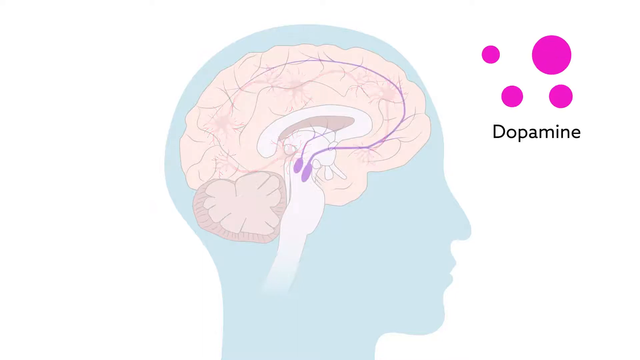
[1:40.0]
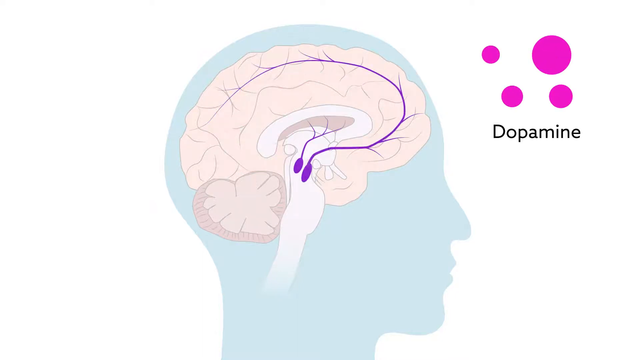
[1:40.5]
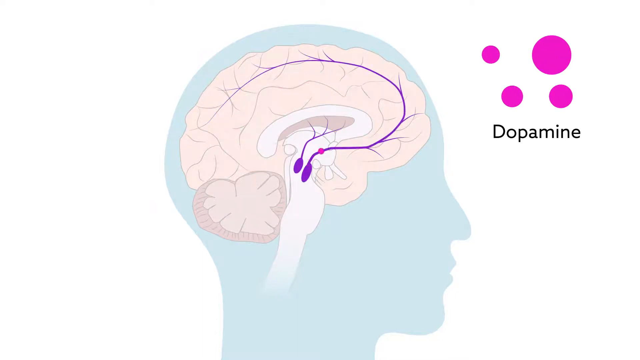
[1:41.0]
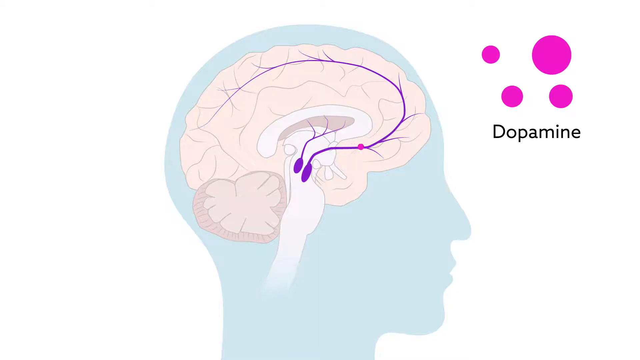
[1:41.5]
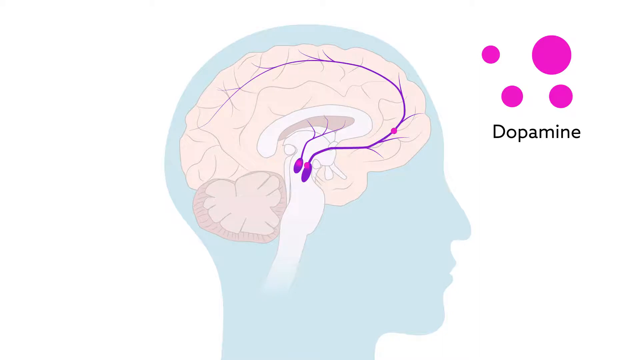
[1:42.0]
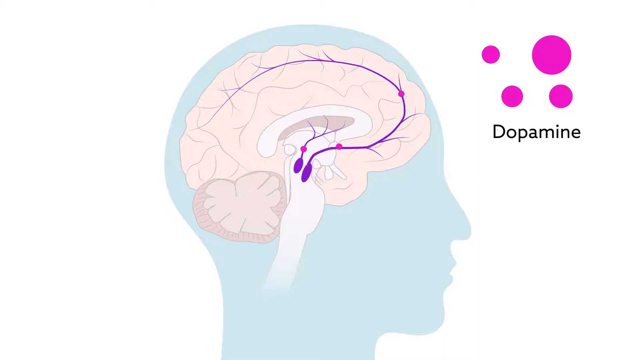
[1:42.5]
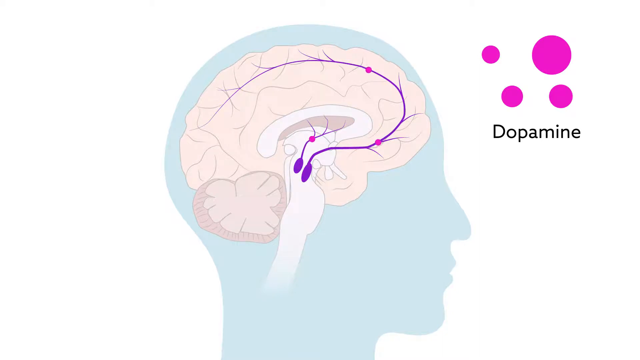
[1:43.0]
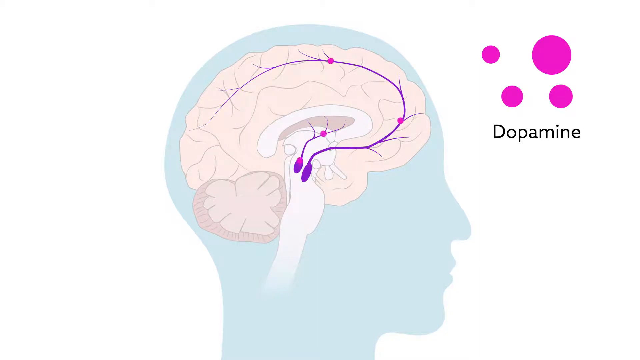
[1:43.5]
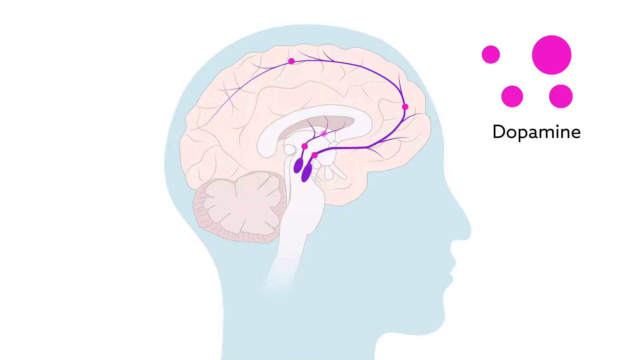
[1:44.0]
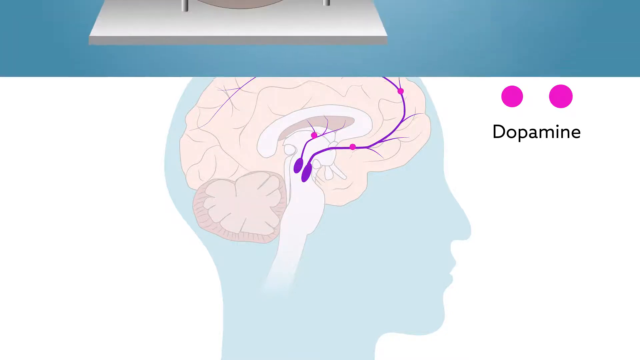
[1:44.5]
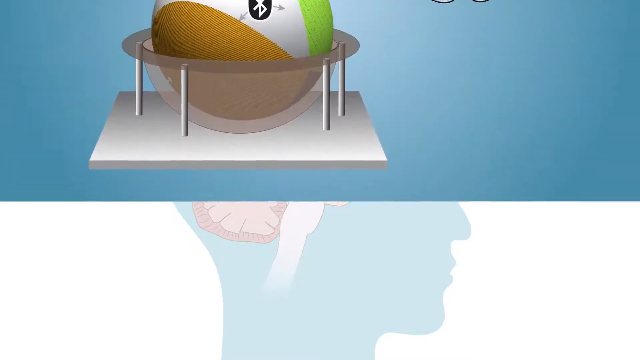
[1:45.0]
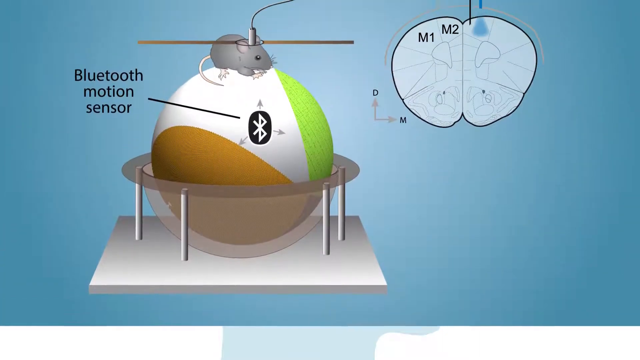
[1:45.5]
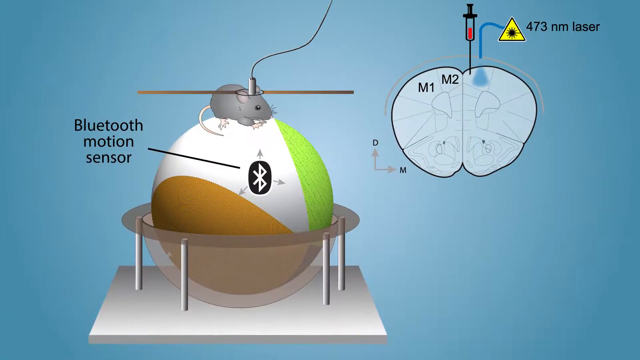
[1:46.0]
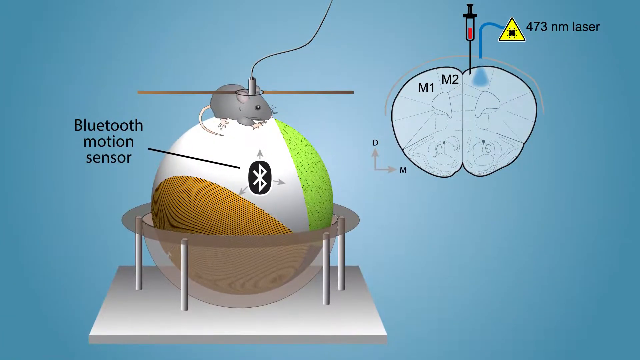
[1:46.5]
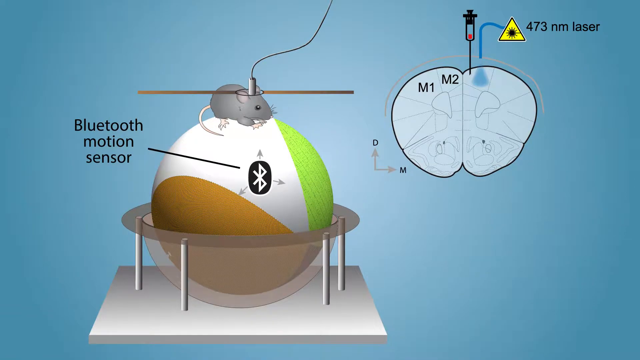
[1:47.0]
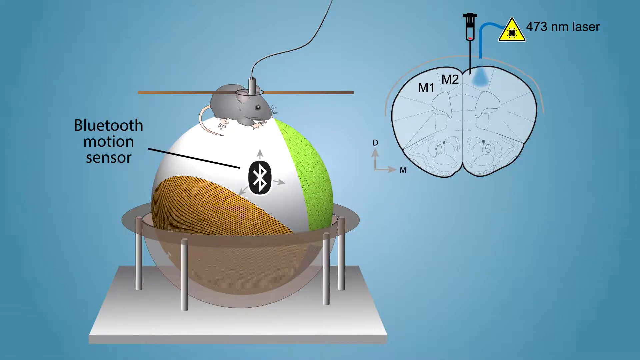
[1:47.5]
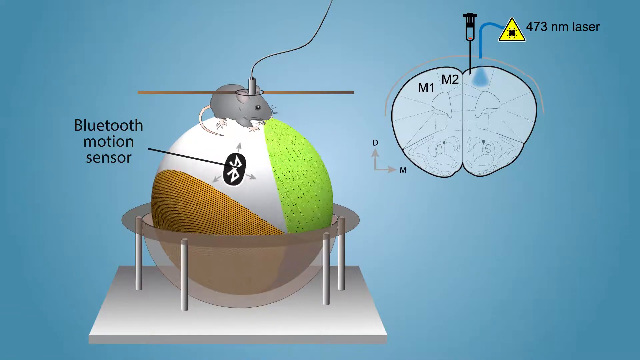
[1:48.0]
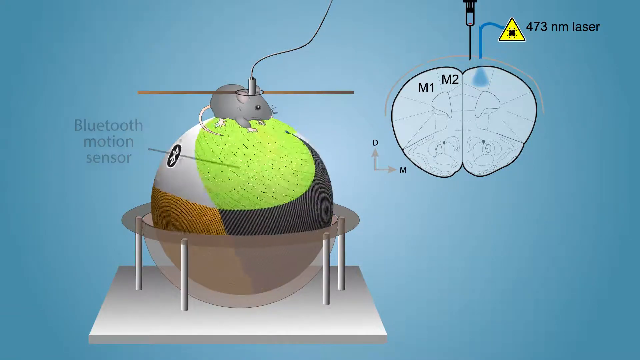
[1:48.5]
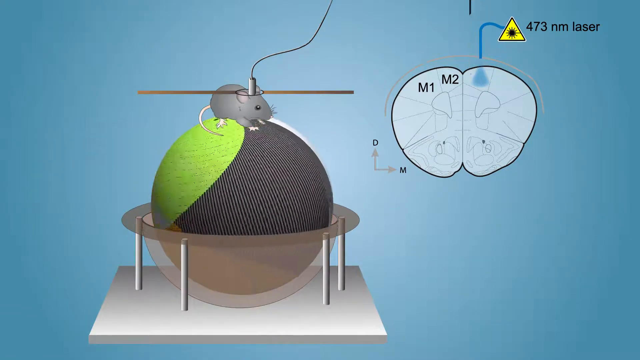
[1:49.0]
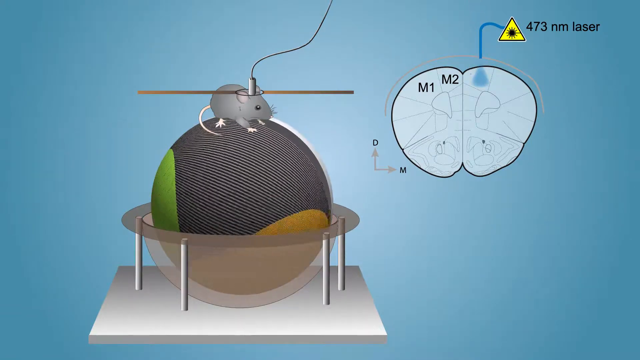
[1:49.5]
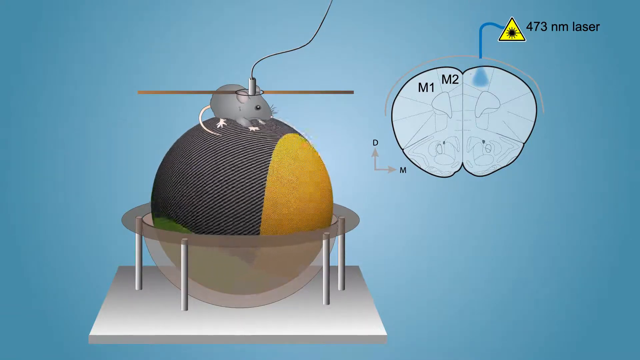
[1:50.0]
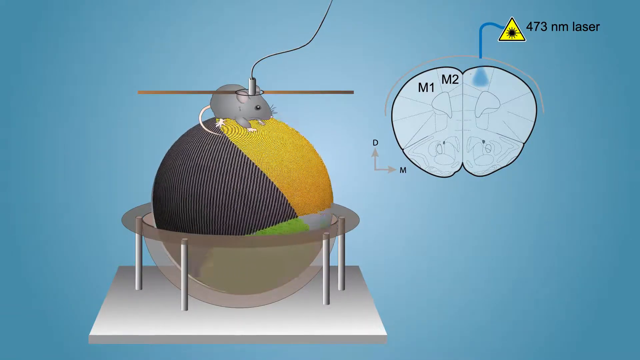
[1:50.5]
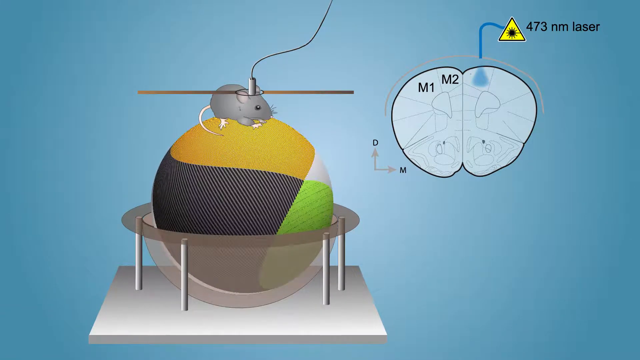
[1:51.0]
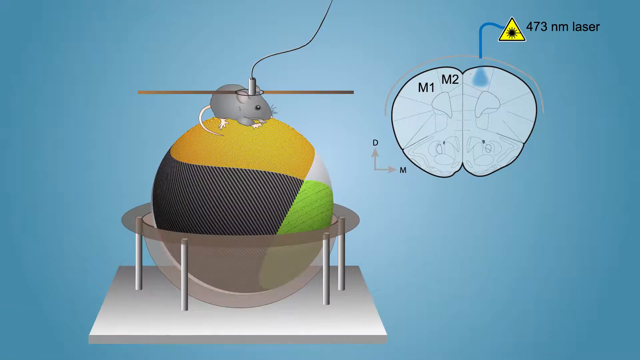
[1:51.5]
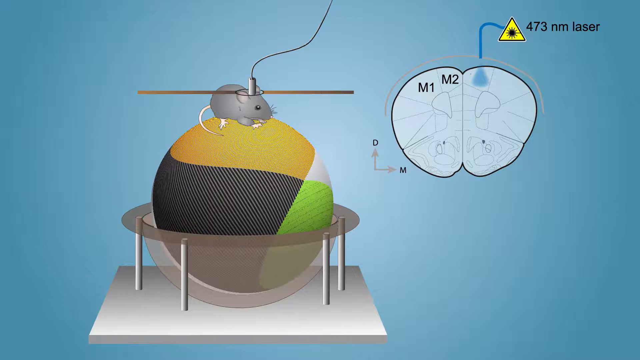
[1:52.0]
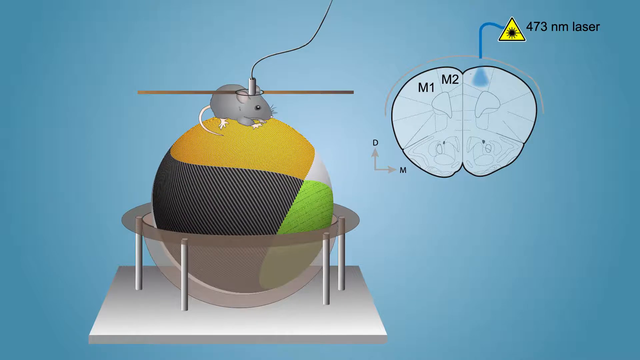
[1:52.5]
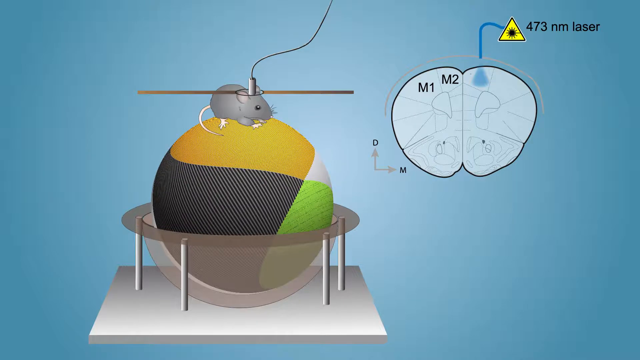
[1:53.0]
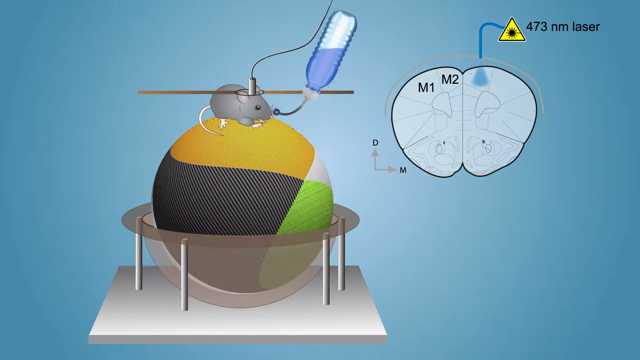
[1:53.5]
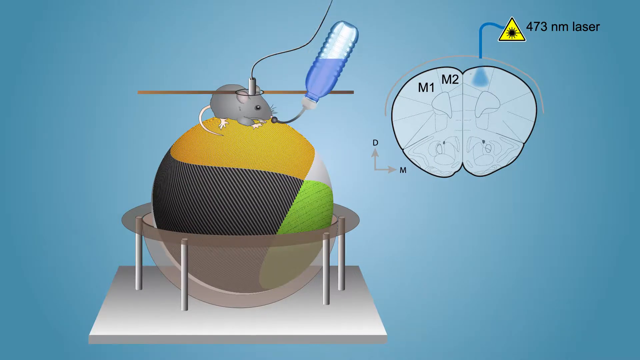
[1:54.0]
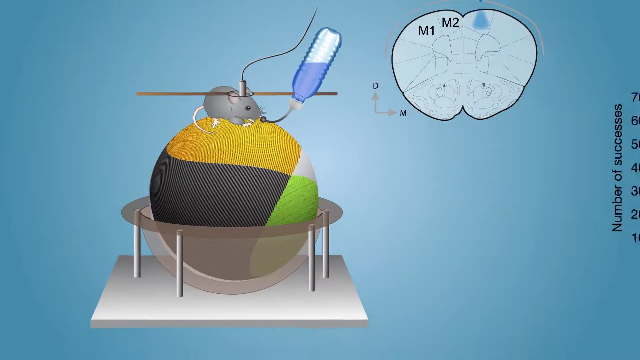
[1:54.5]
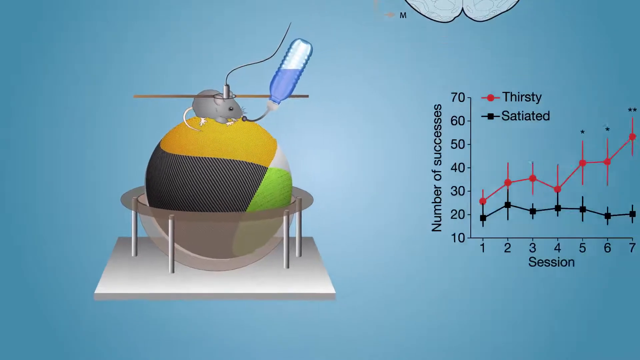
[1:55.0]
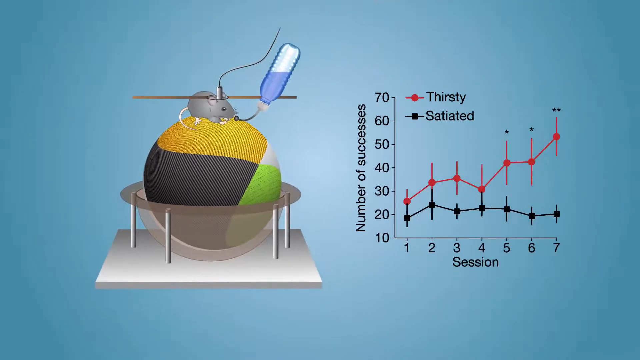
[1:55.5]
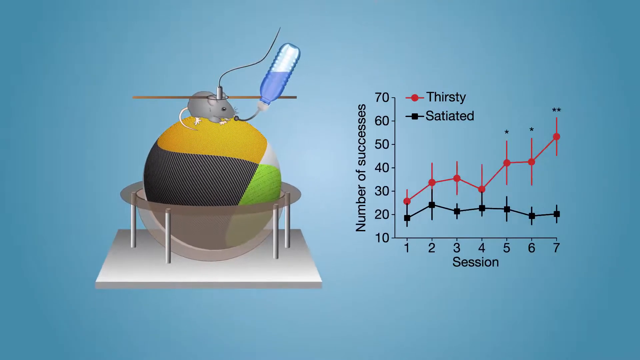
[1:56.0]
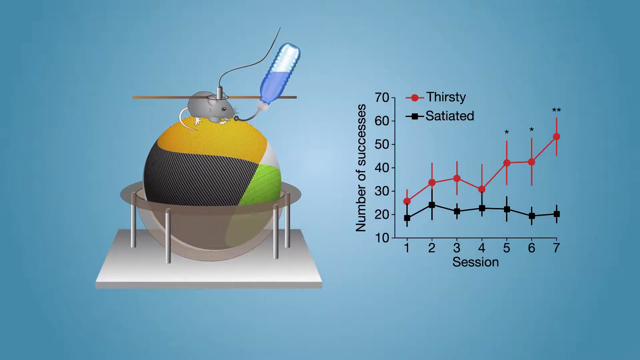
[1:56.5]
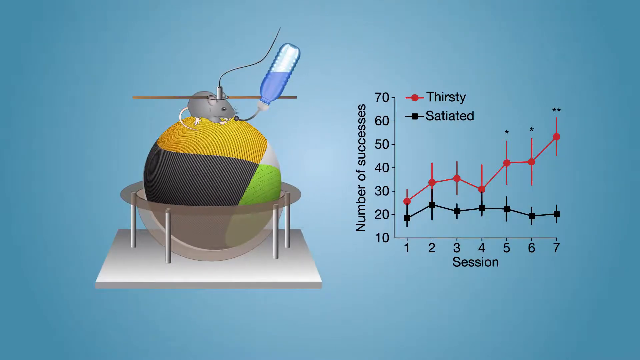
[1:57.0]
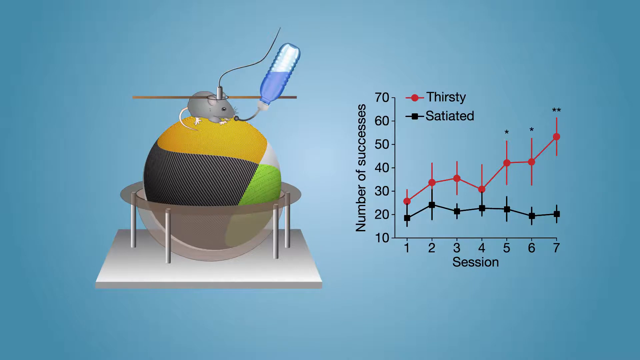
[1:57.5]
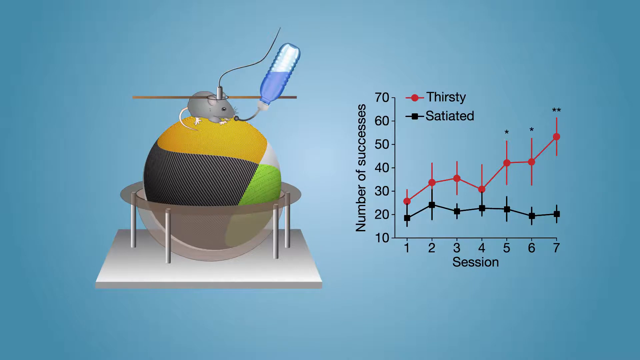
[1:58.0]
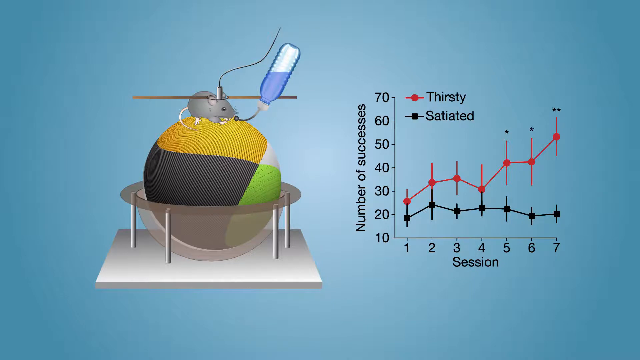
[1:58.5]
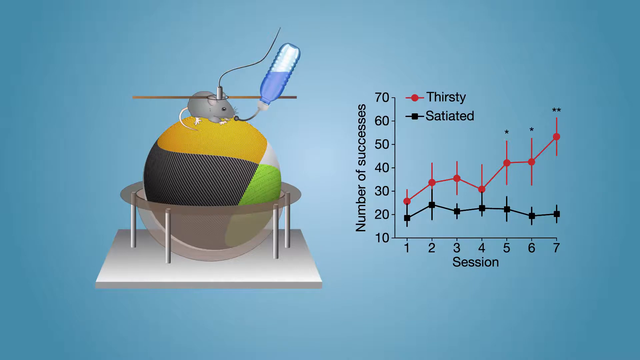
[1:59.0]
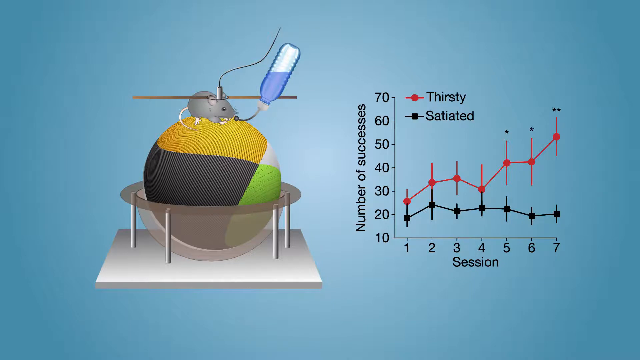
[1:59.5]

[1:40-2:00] The same brain diagram now has purple veins instead of red ones; the purple veins run in a circular fashion, with a couple of veins veering off in a curved fashion. The topic apparently is dopamine: a big picture of dopamine appears at the top right, and in the diagram it is shown as small pink or pinkish-purple dots flowing upwards and around the purple veins in the brain. Another animation follows in which a globe turns because a cartoonish gray mouse with a pale pink tail sits on top of it, on a Bluetooth motion sensor that rolls around, affecting different parts of the brain. At the end, a line graph is brought up.